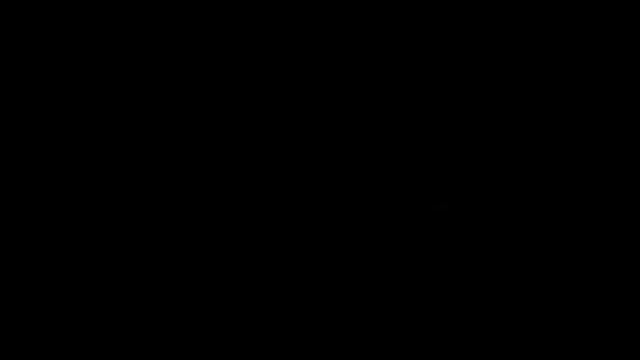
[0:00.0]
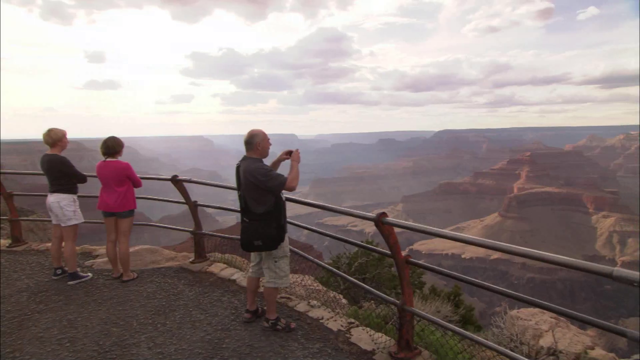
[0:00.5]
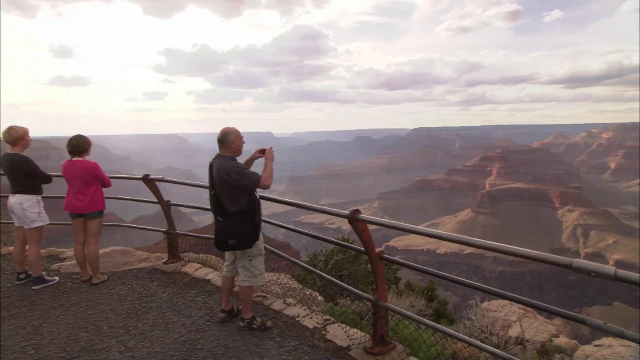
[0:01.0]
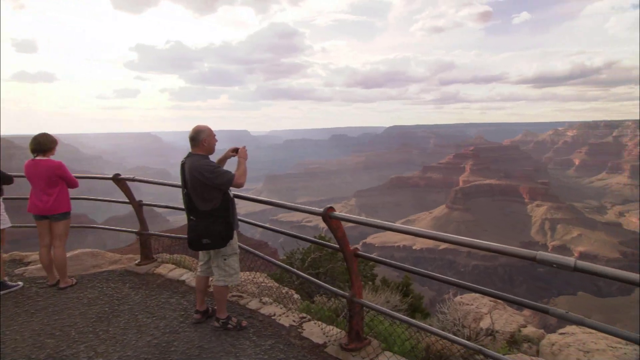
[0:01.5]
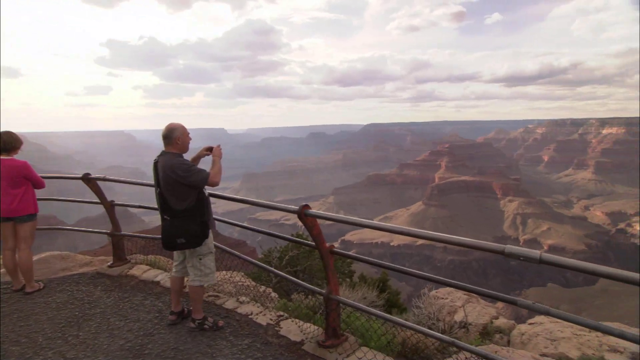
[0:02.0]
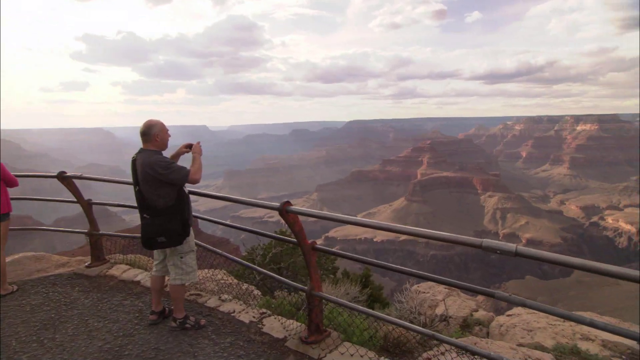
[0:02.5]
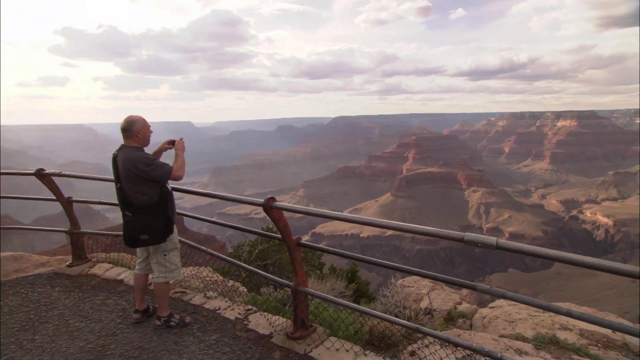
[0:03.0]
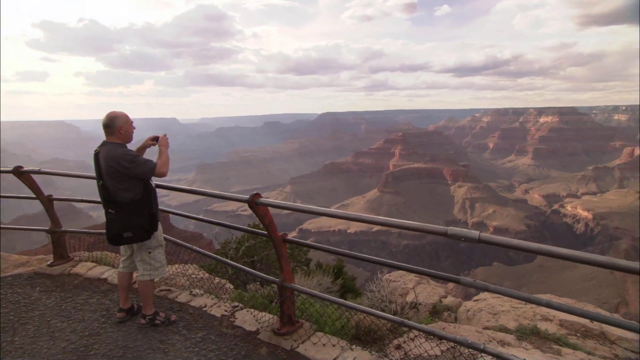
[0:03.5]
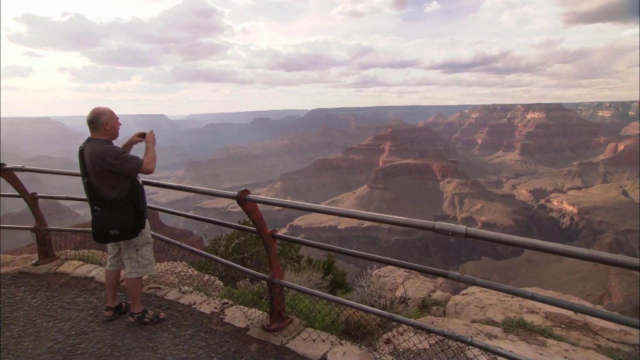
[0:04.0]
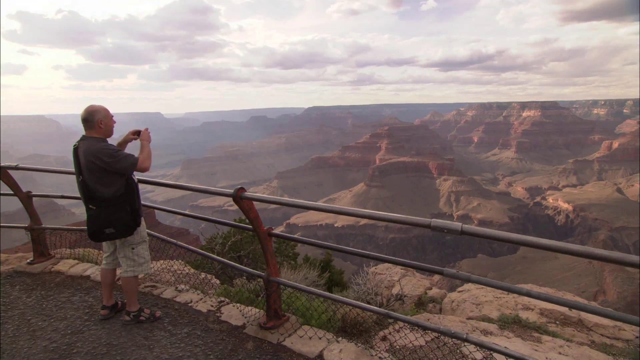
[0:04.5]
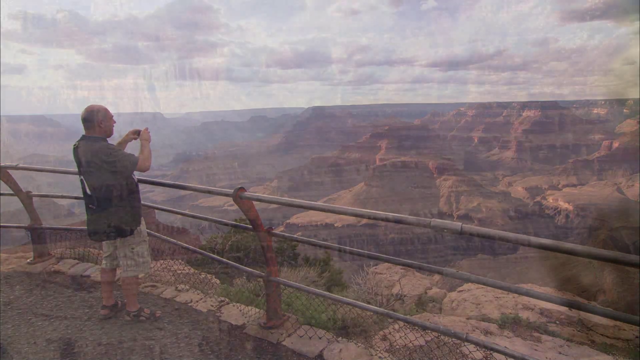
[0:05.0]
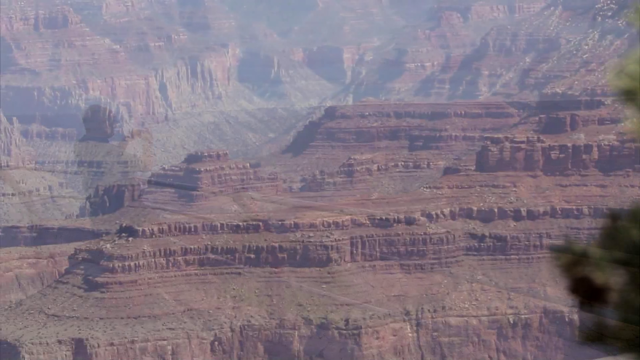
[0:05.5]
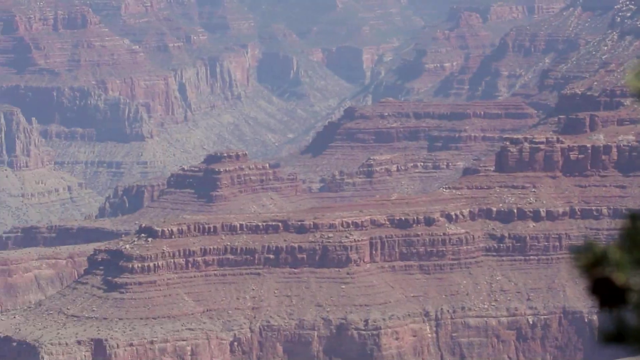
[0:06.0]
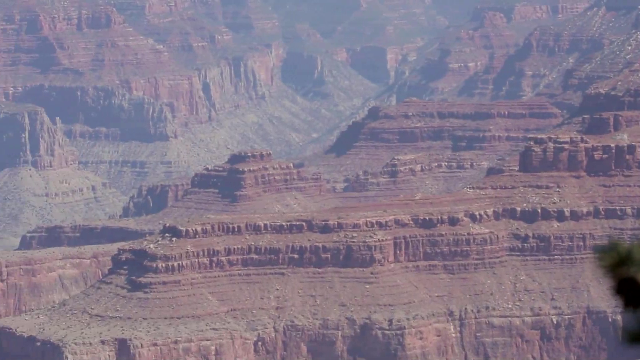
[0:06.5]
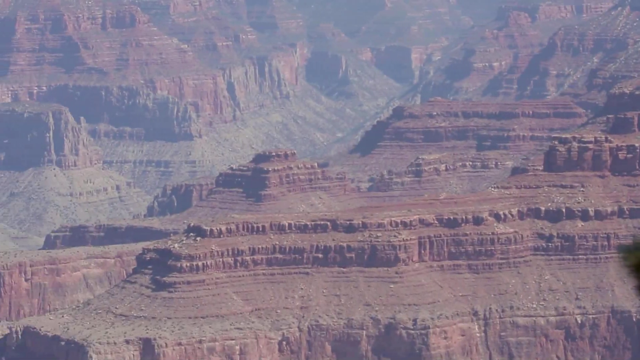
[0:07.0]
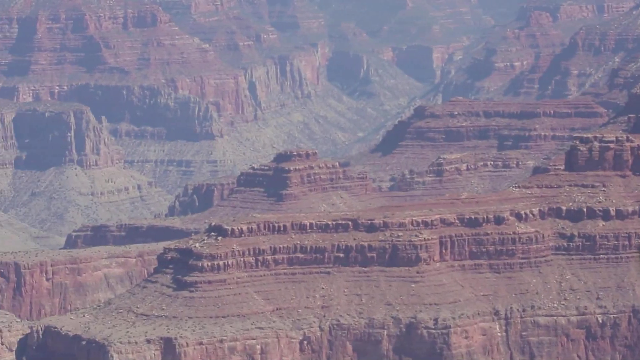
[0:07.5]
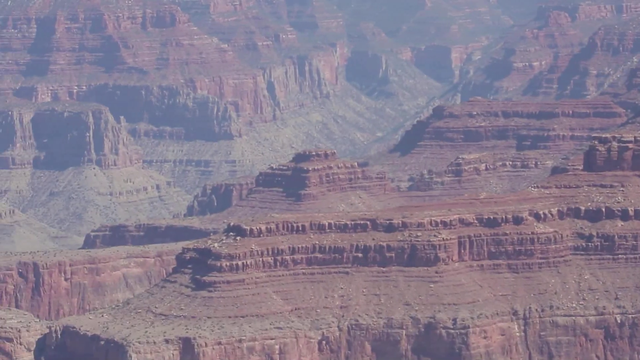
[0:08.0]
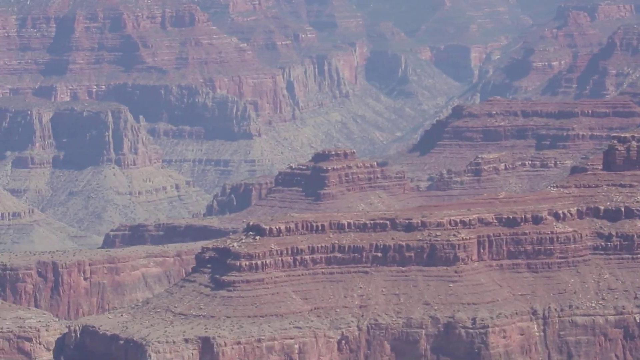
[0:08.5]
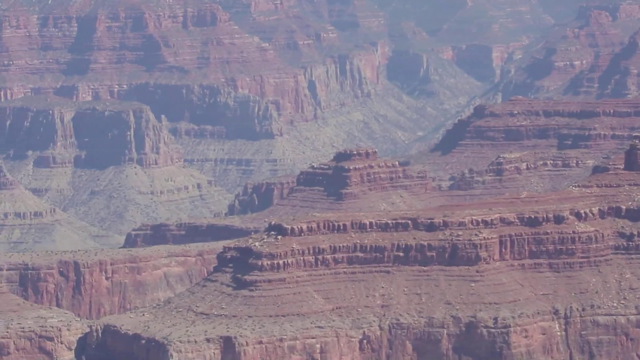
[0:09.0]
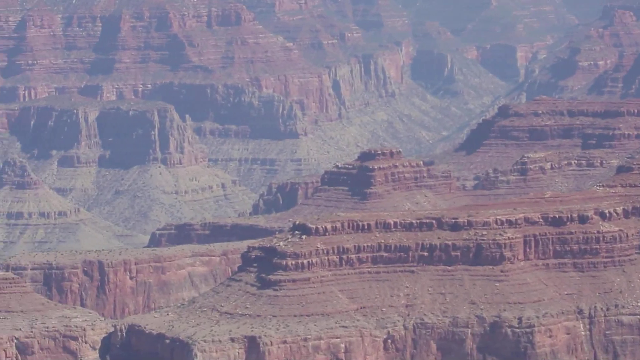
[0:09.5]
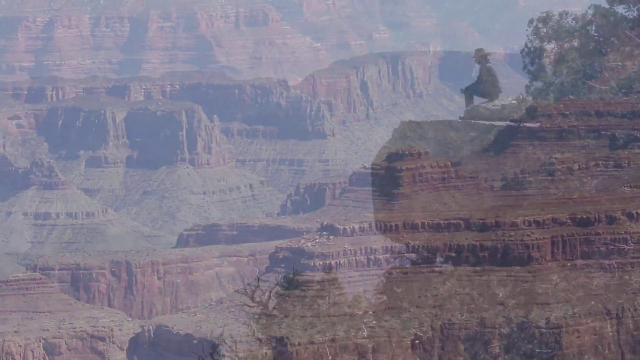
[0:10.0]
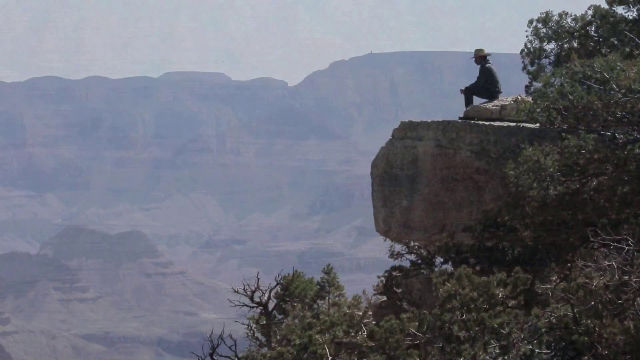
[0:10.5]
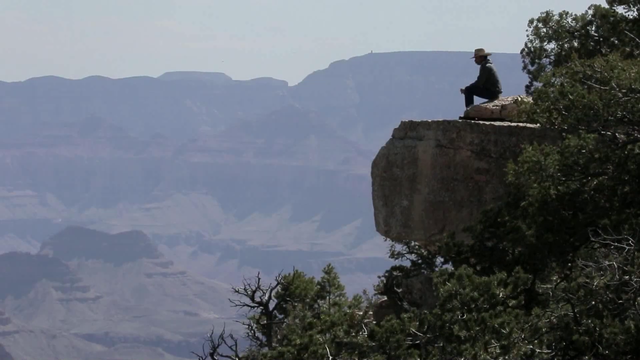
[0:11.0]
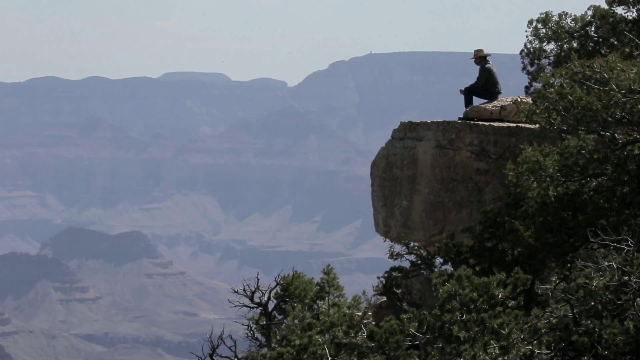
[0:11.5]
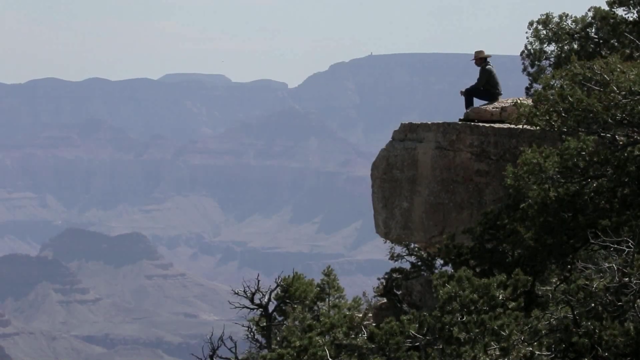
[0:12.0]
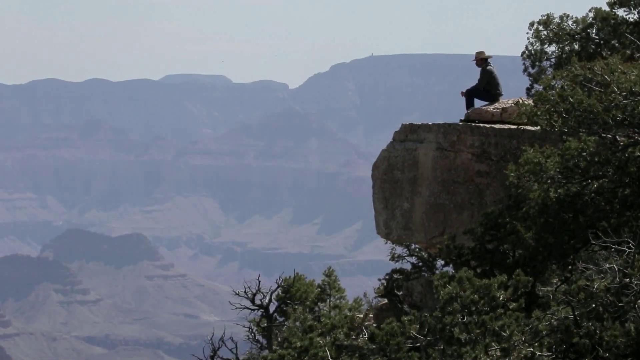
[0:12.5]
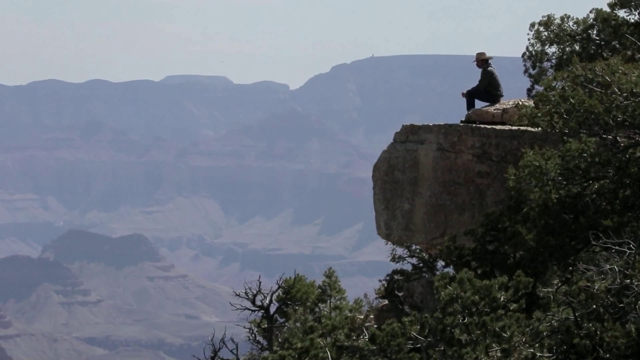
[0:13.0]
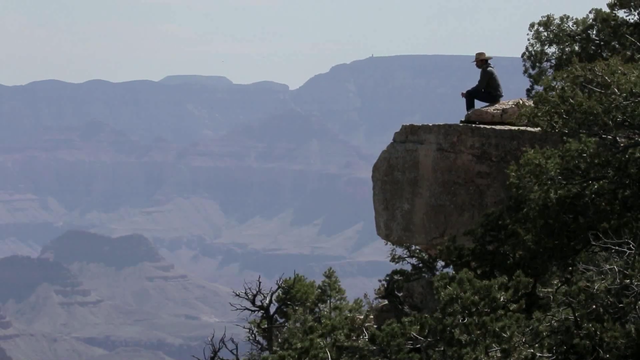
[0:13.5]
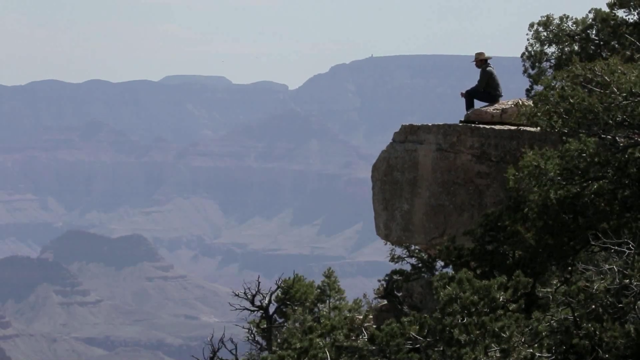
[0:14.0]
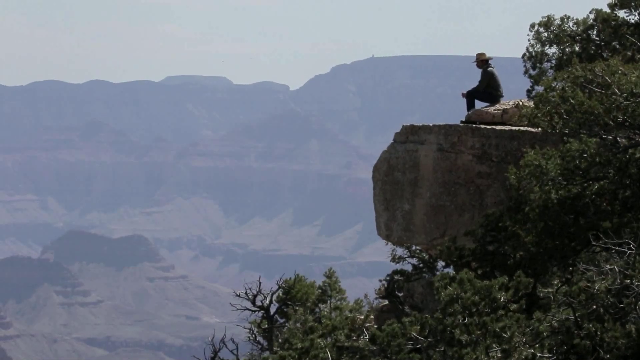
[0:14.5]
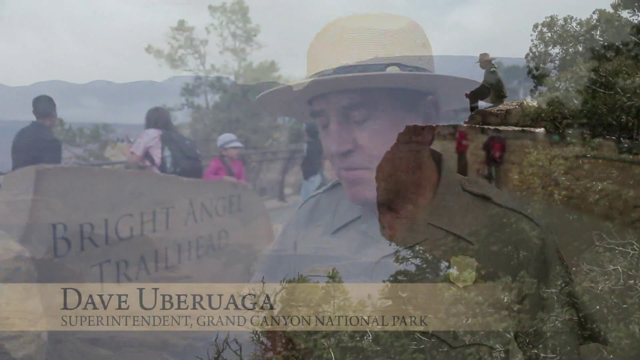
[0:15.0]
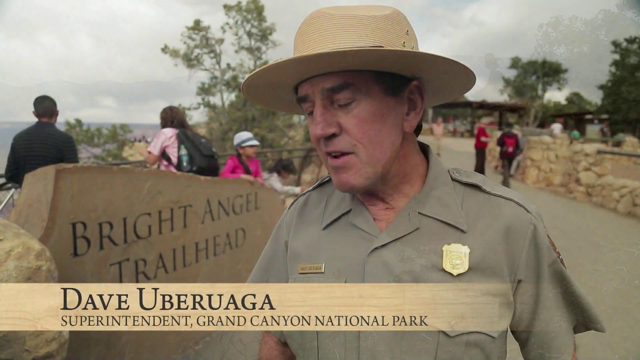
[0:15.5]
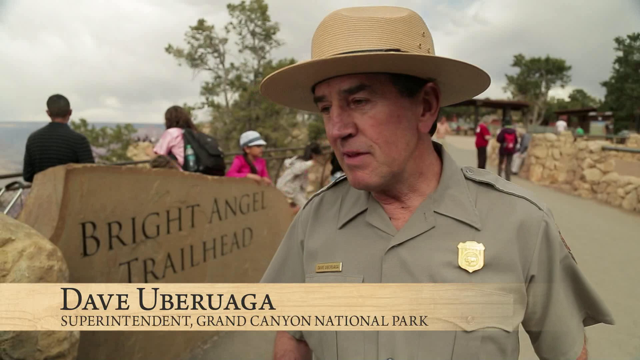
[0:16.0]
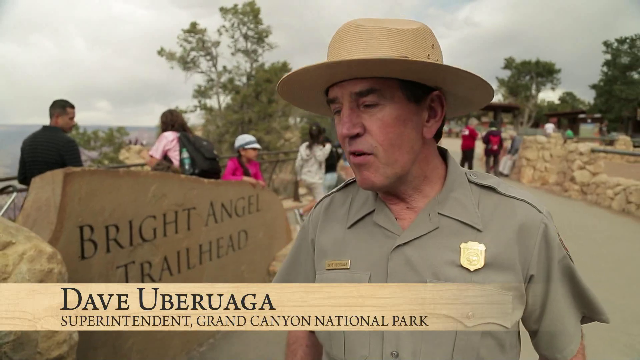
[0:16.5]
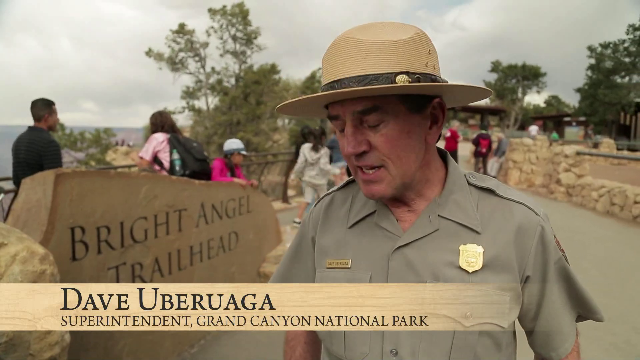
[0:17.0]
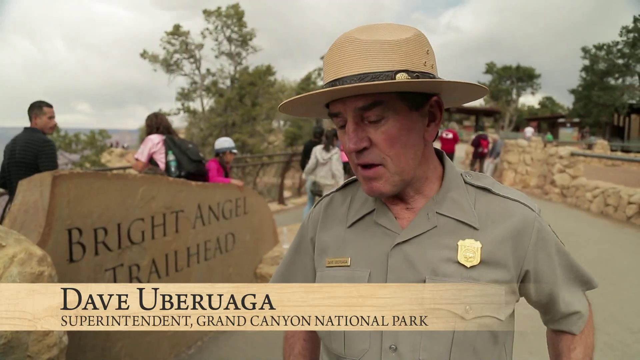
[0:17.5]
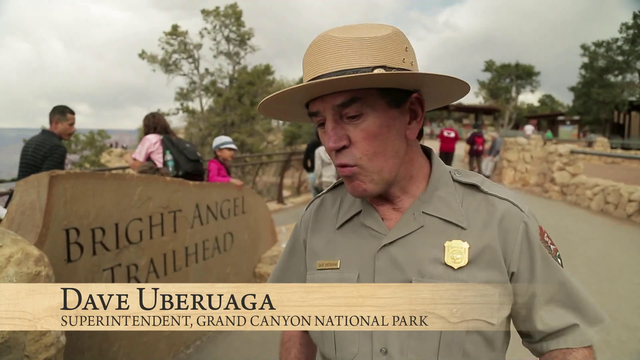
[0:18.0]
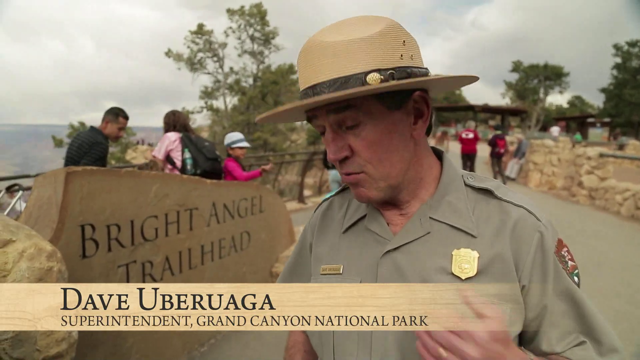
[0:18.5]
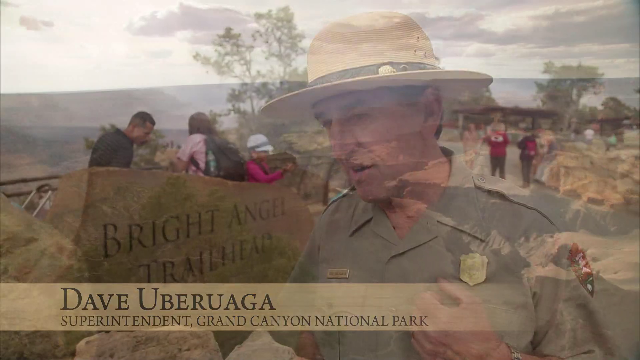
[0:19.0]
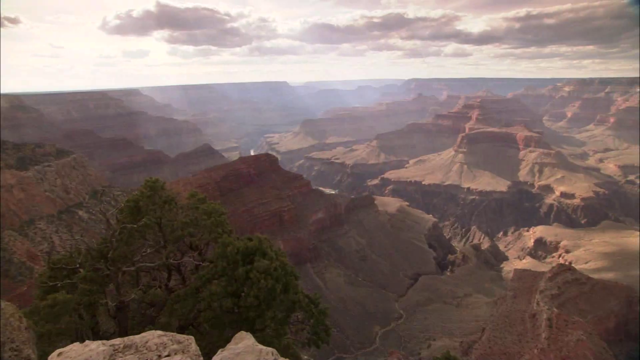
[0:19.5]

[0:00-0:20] Someone stands on the side of a mountain overlooking desert scenery. A man taking pictures of the desert is apparently the white man sitting alone at the top of a cliff, relaxing there. Dave Guadagua, Superintendent of Grand Canyon National Park, talks and addresses people, and the footage ends with the superintendent talking to the media. Many tourists are there doing different activities and taking pictures.